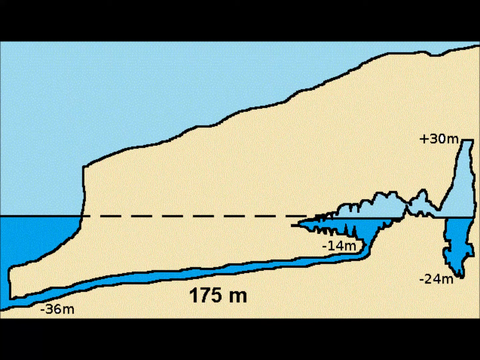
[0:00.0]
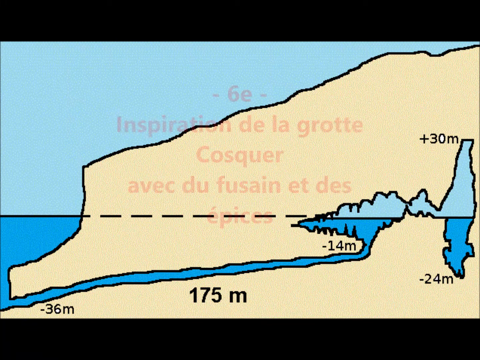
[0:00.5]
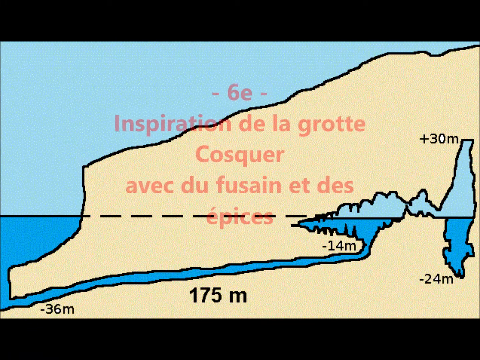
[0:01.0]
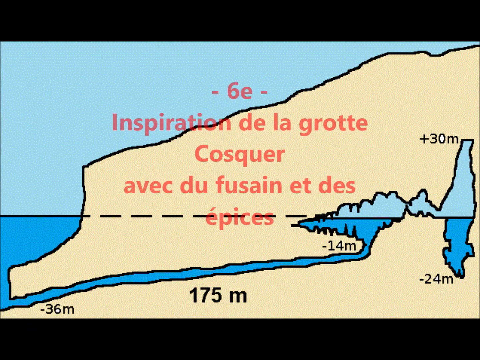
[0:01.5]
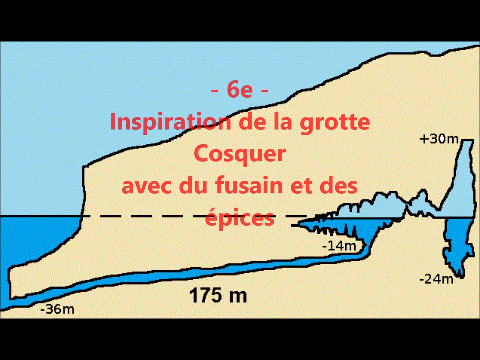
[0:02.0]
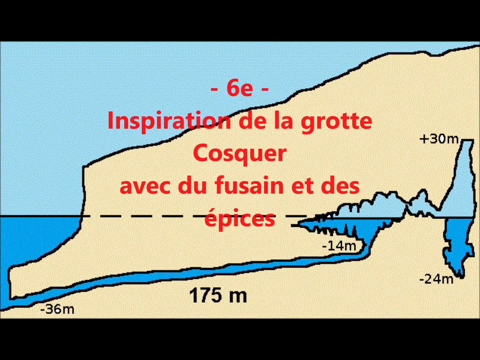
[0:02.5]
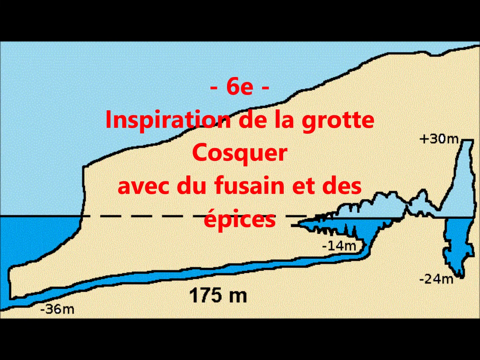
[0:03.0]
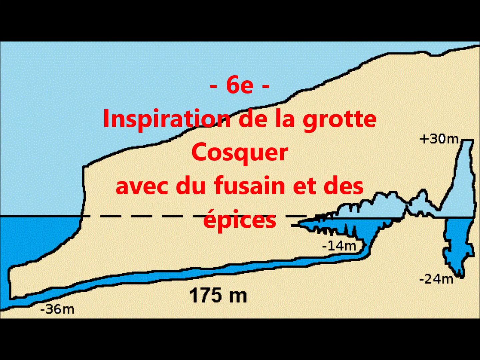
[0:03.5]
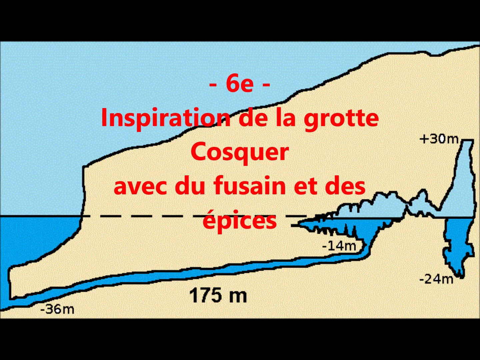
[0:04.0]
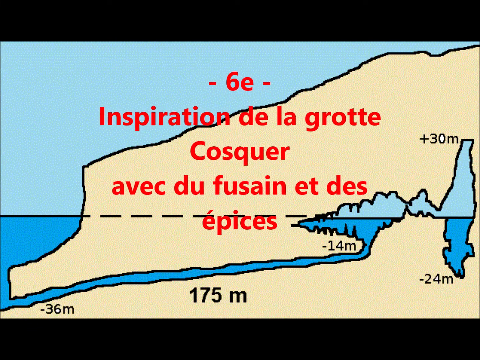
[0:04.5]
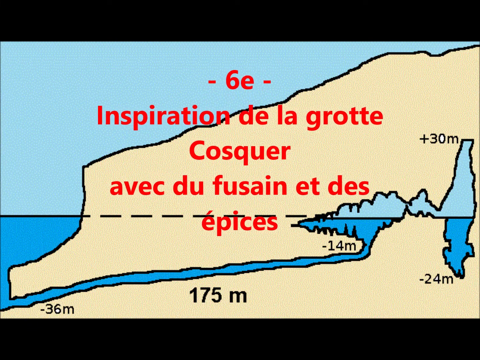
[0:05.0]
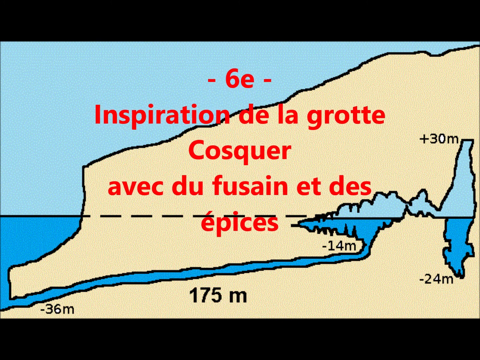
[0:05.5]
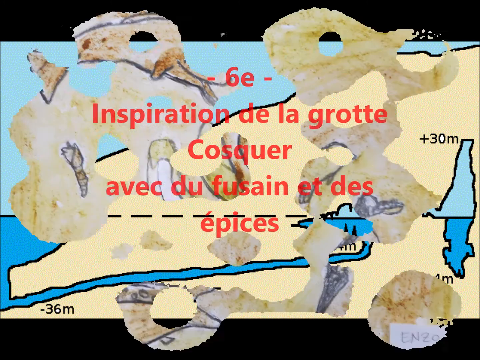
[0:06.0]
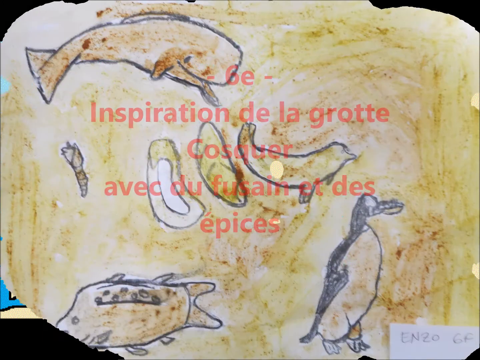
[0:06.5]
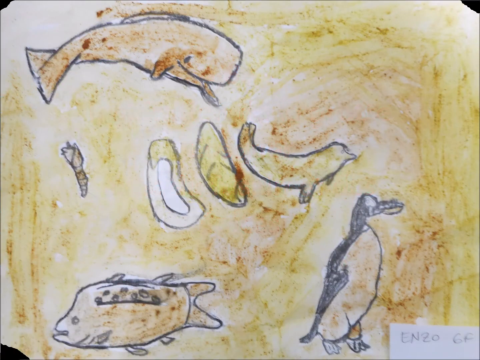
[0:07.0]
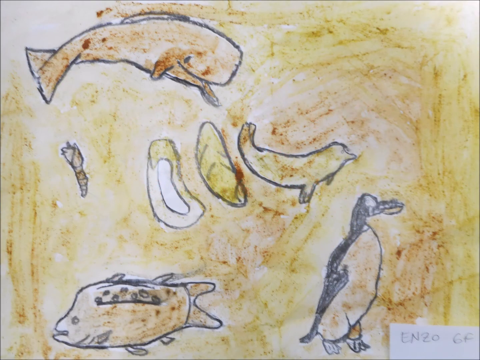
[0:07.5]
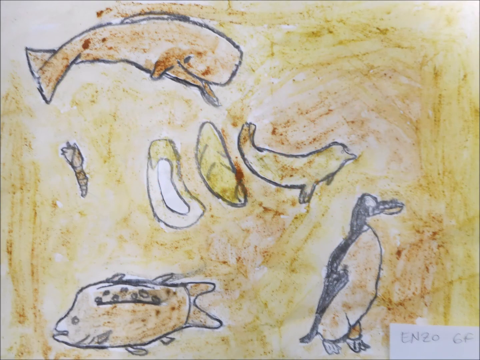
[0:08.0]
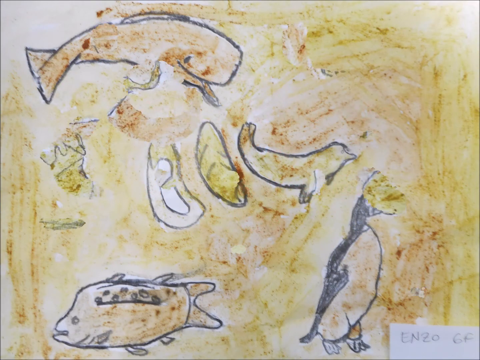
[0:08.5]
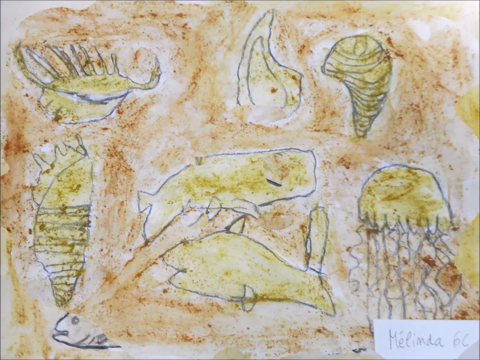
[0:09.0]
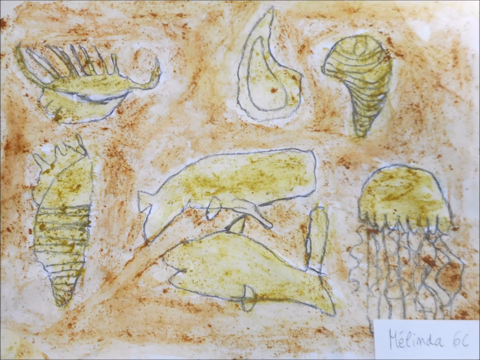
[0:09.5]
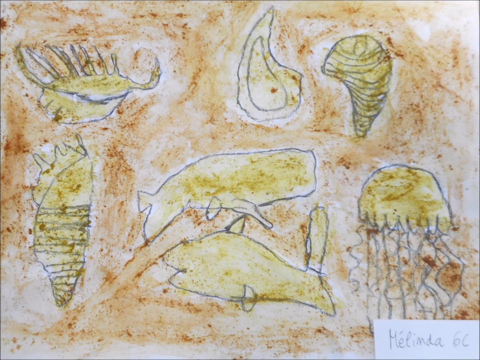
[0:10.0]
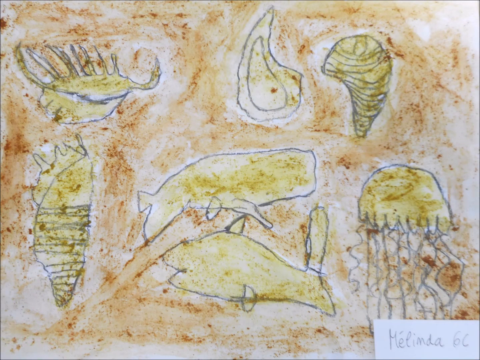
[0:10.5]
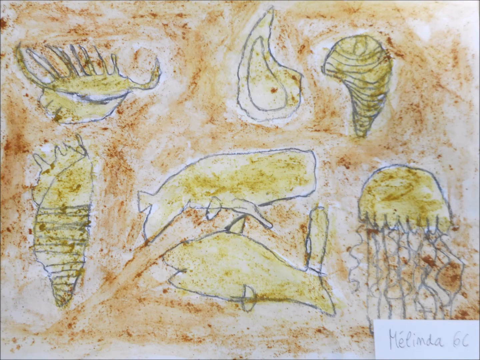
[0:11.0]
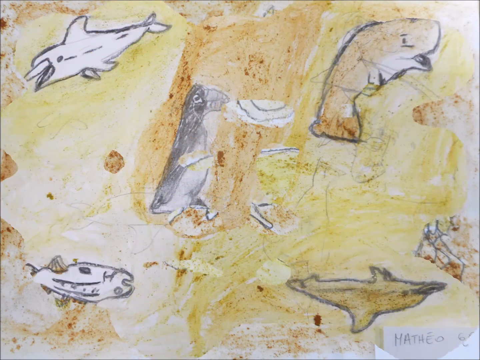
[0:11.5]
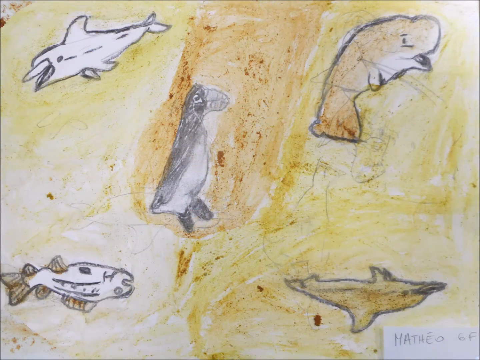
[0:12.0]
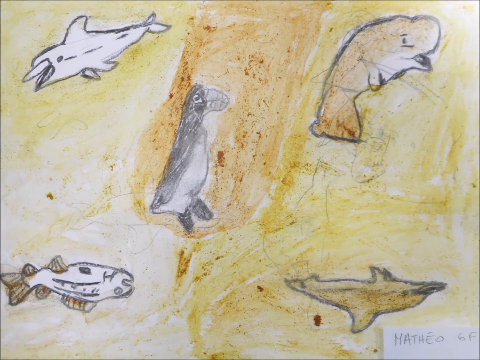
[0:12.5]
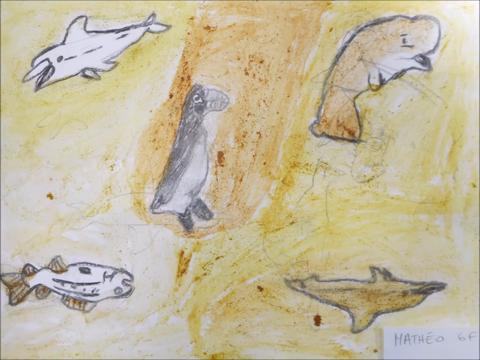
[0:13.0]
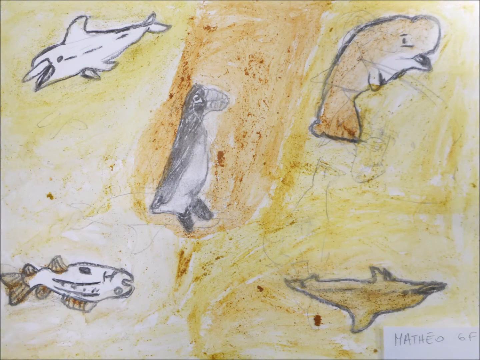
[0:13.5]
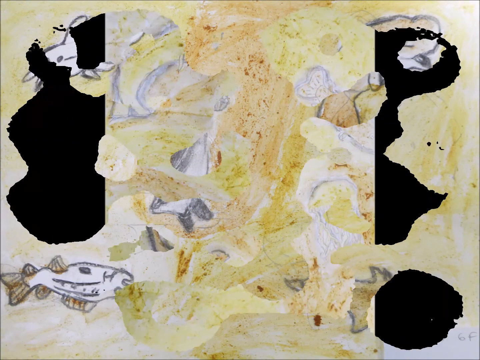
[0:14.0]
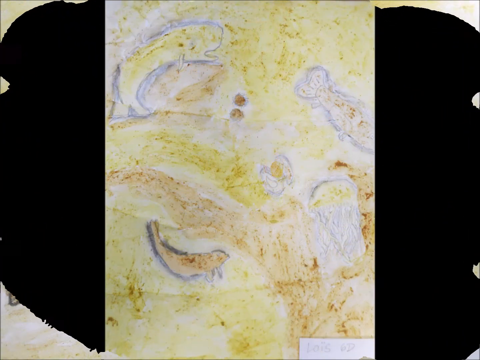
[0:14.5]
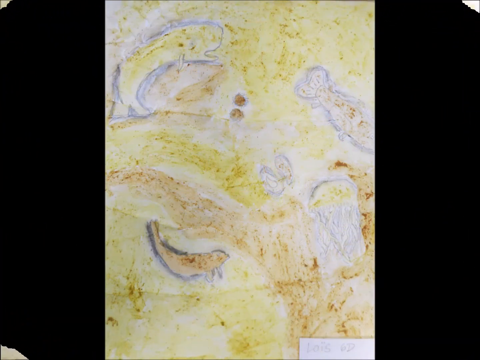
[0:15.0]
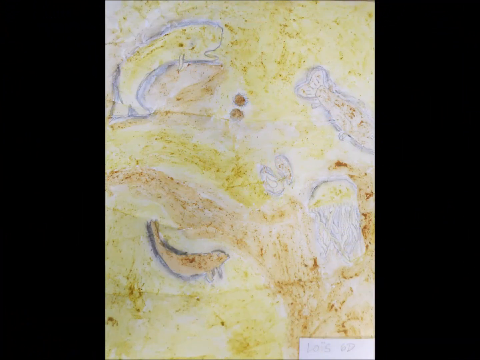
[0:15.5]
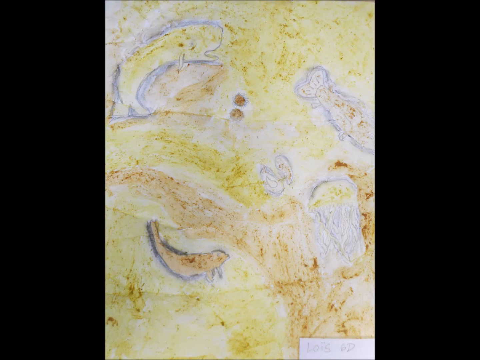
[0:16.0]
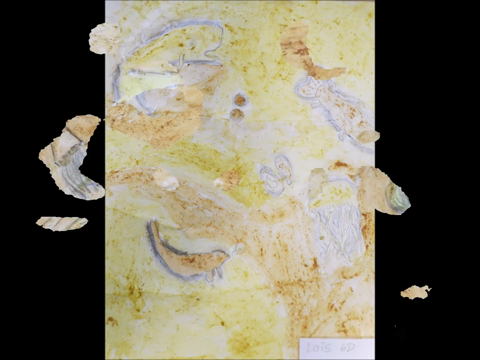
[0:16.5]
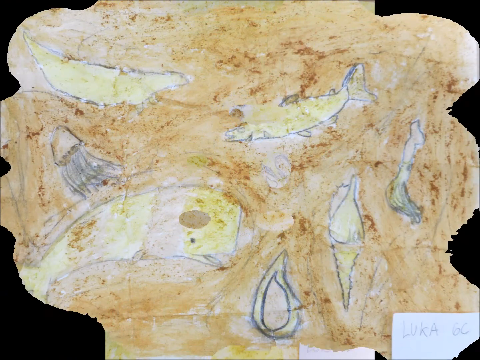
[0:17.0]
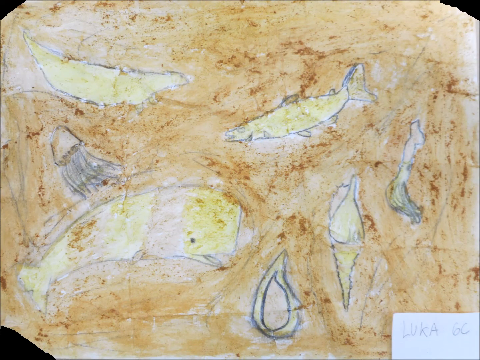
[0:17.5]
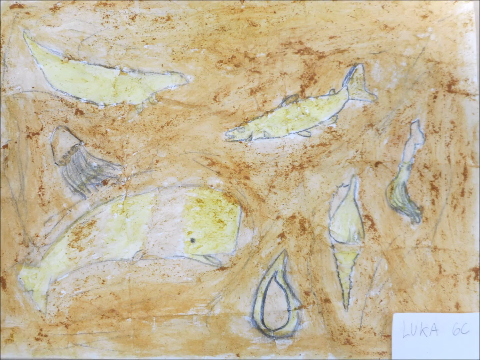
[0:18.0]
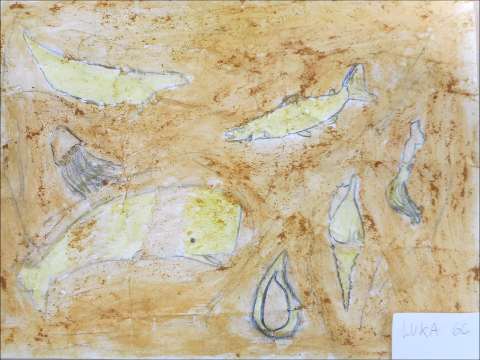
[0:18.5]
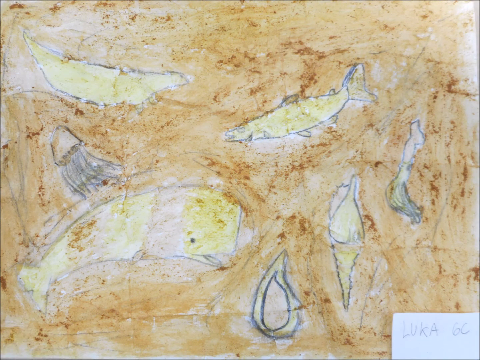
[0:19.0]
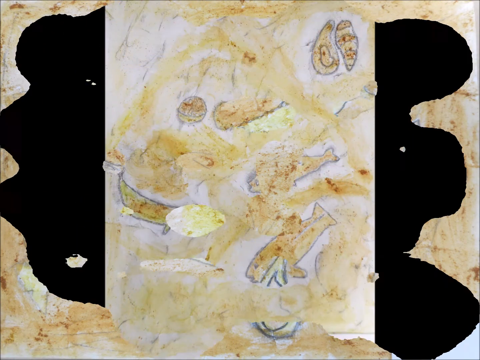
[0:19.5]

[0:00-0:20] The video begins with a cartoon-style geography graphic showing depths and heights: "175 meters," then 36 meters under the sea, 14 meters under the sea, 24 meters under the sea, and 30 meters above the sea. Text appears in French. Drawings follow. The first looks like a child's pencil-and-color rendition of a smiling whale, oysters, a dolphin, a penguin, a fish, and a crab. The next drawing, also drawn and colored, shows a squid, a mollusk, an oyster, a whale, and other fish. Another drawing shows penguins, sharks, a dolphin, and whales.